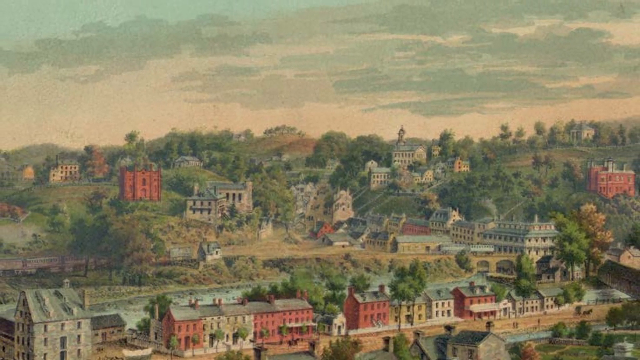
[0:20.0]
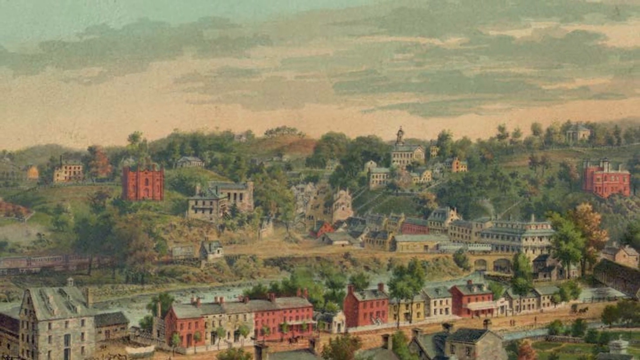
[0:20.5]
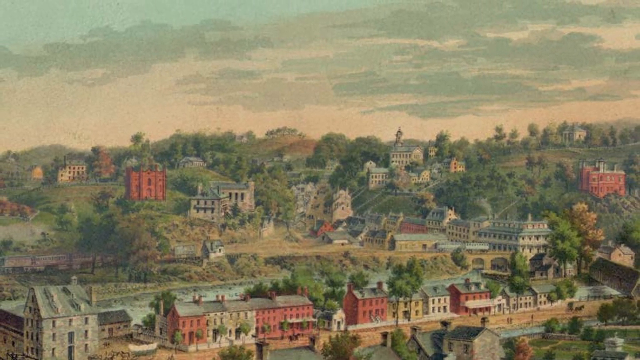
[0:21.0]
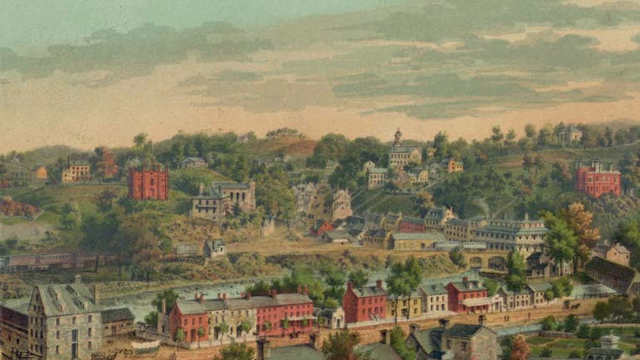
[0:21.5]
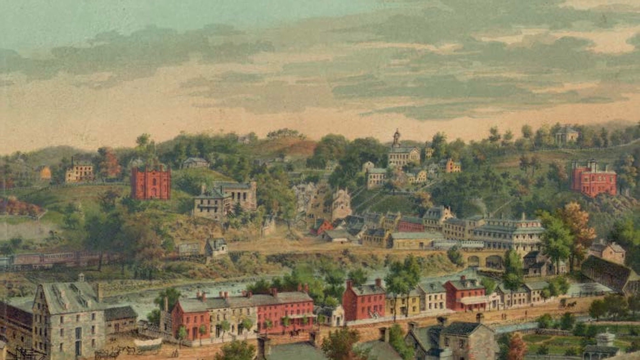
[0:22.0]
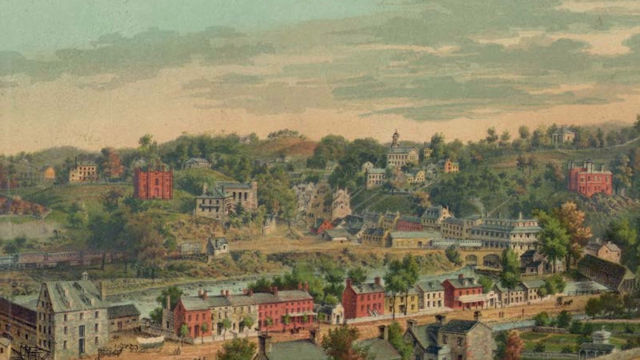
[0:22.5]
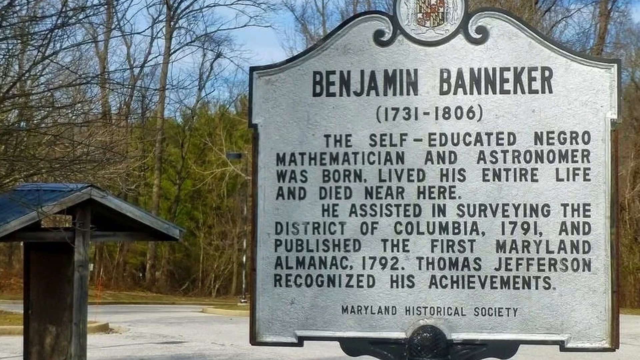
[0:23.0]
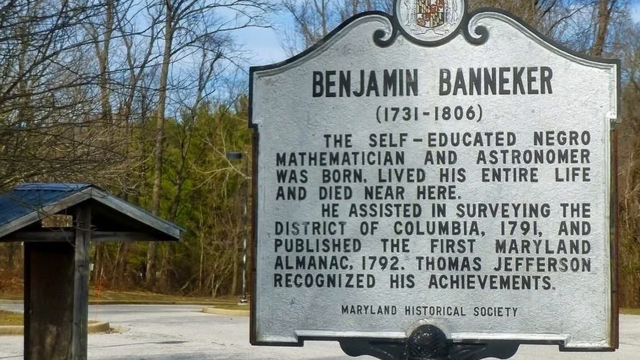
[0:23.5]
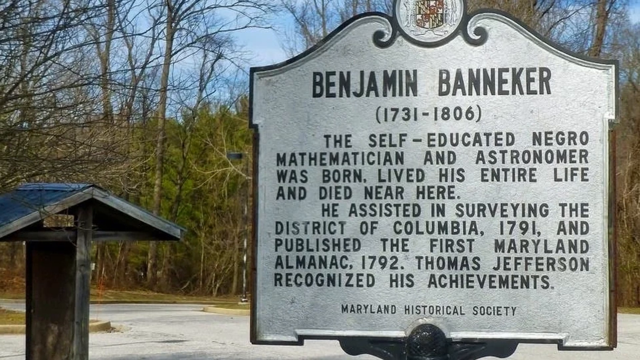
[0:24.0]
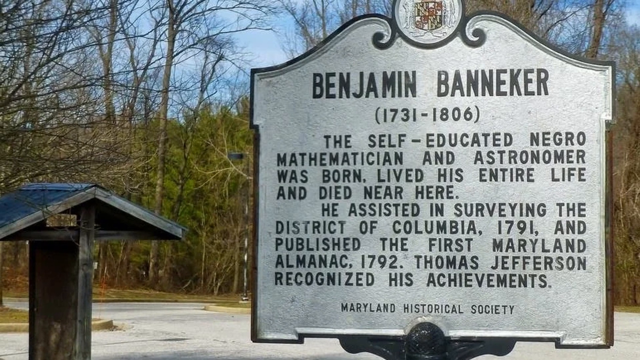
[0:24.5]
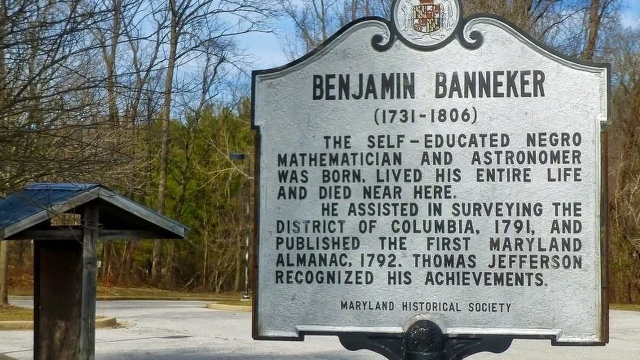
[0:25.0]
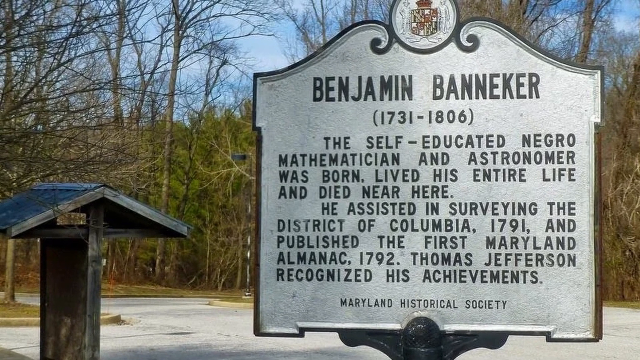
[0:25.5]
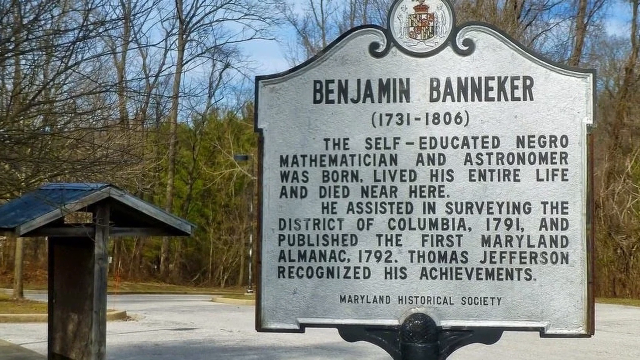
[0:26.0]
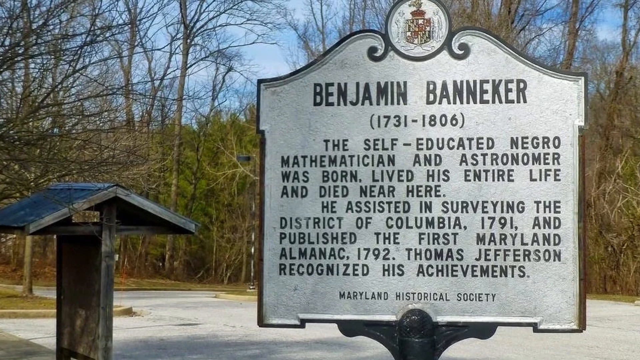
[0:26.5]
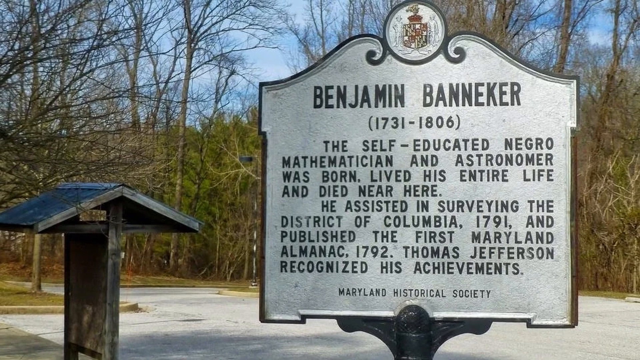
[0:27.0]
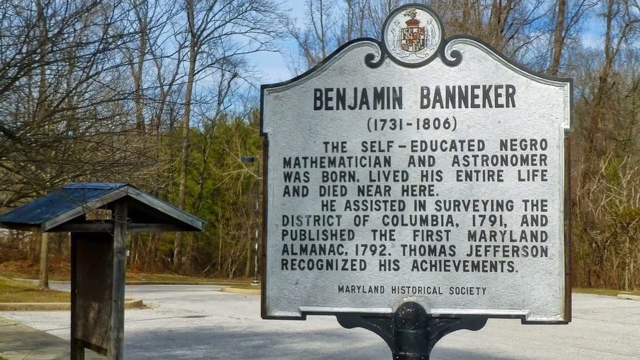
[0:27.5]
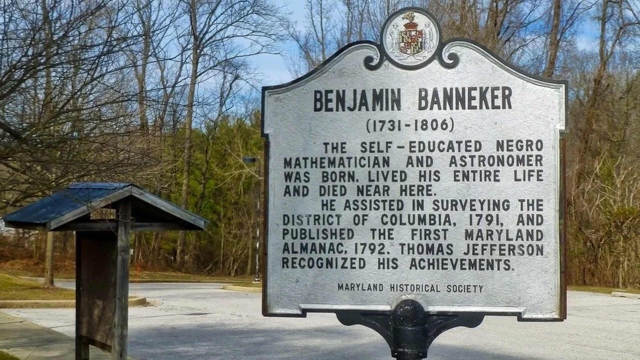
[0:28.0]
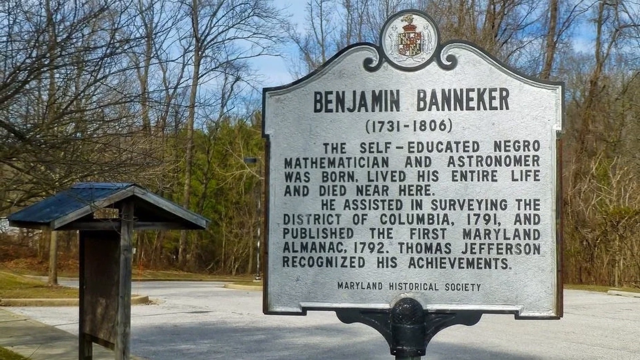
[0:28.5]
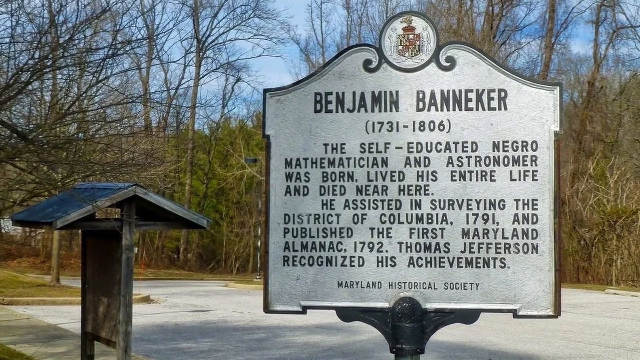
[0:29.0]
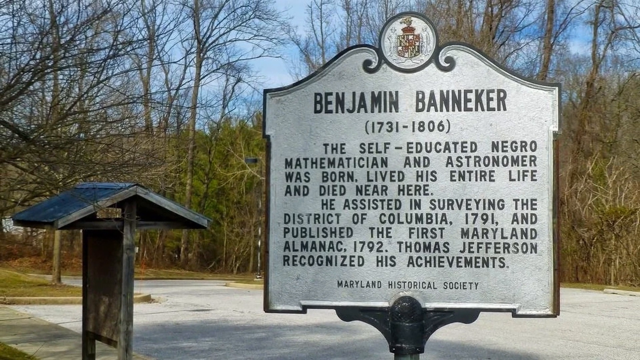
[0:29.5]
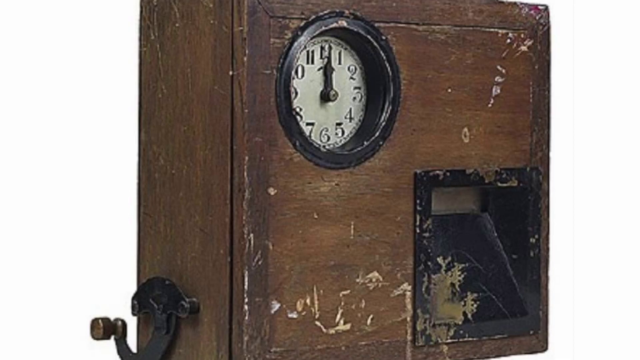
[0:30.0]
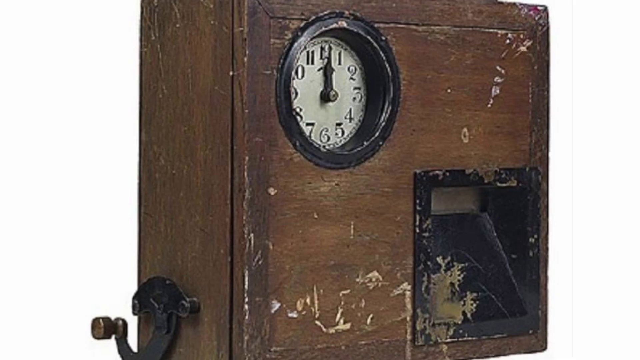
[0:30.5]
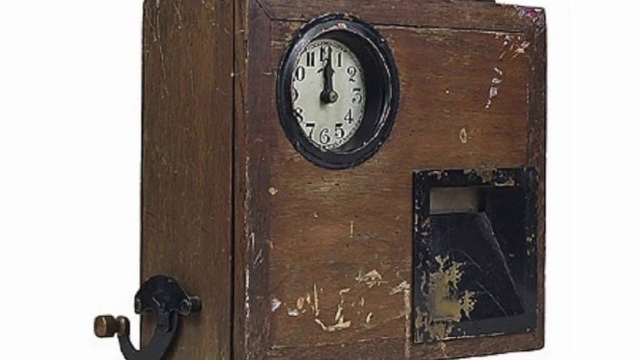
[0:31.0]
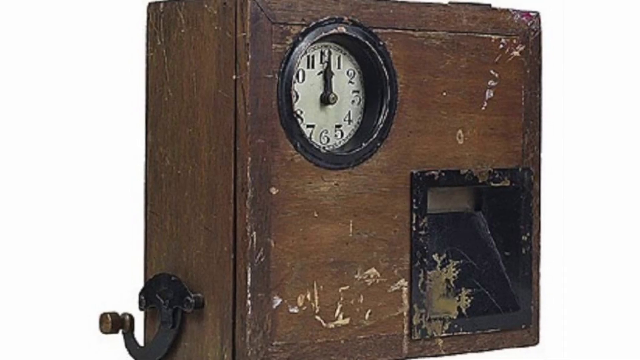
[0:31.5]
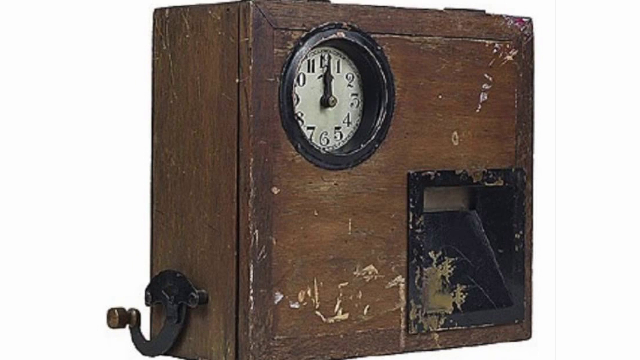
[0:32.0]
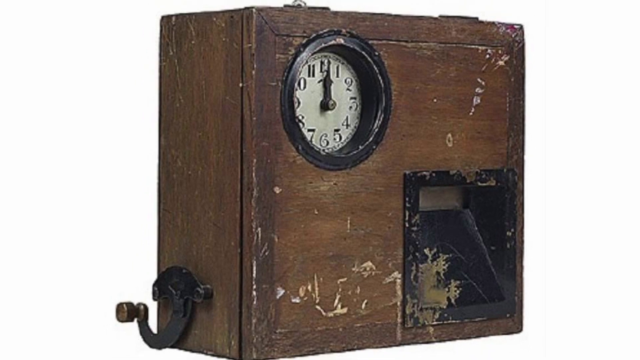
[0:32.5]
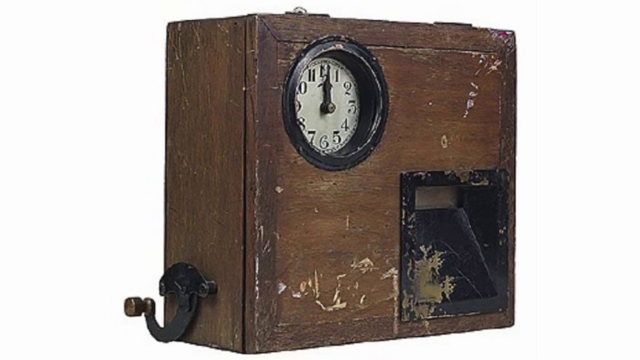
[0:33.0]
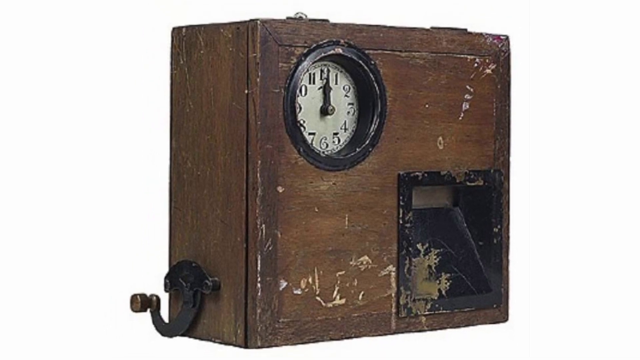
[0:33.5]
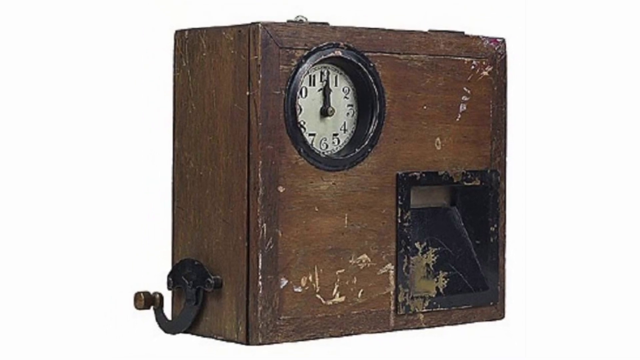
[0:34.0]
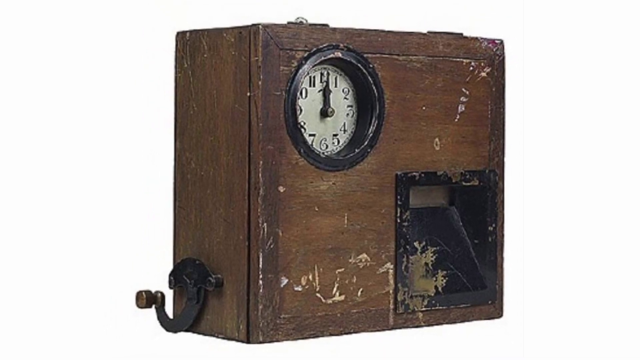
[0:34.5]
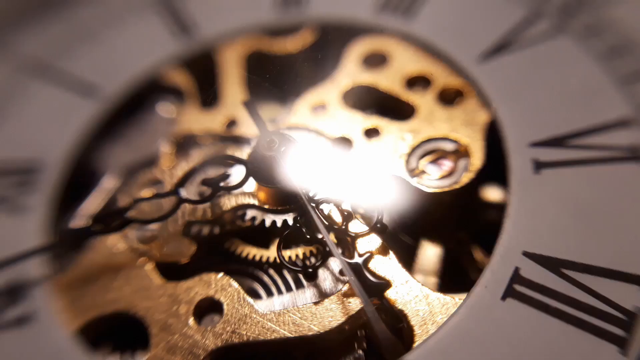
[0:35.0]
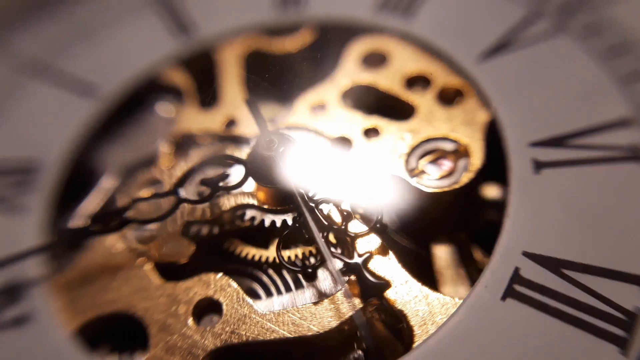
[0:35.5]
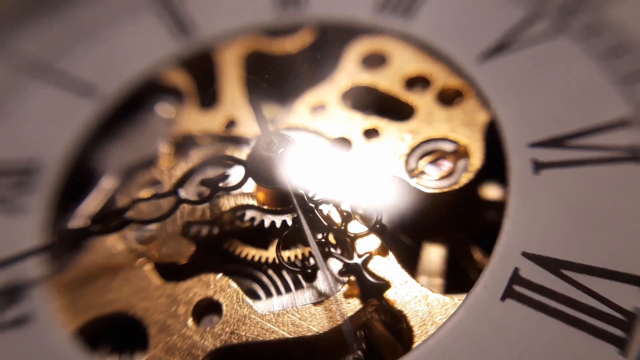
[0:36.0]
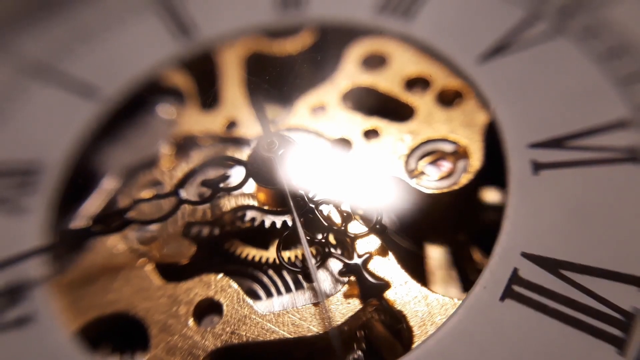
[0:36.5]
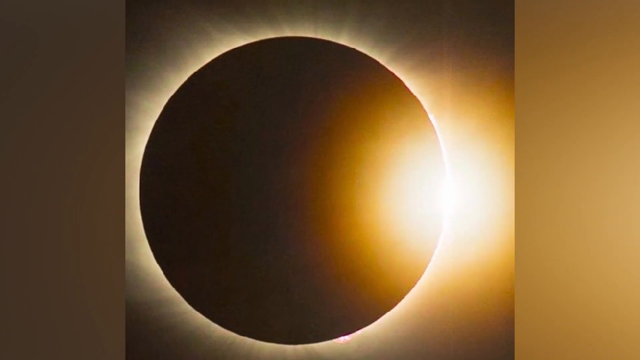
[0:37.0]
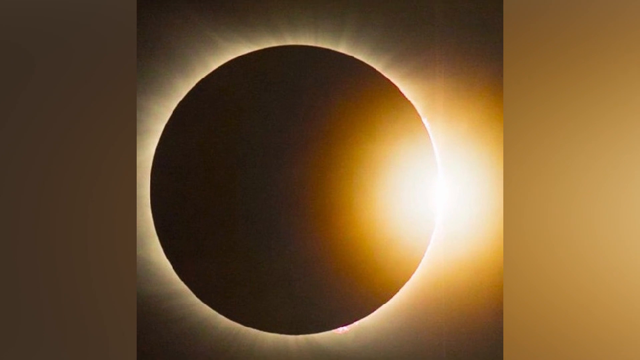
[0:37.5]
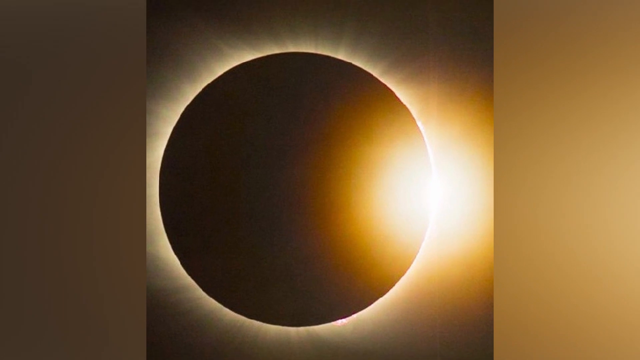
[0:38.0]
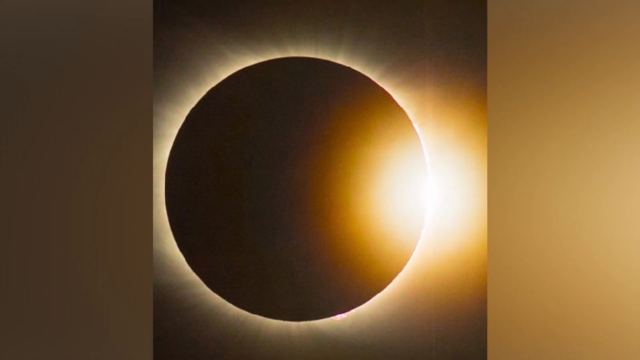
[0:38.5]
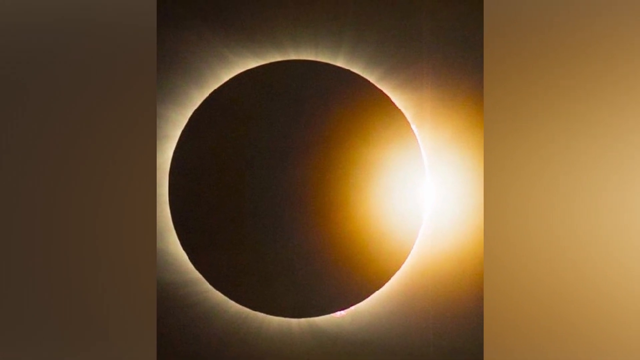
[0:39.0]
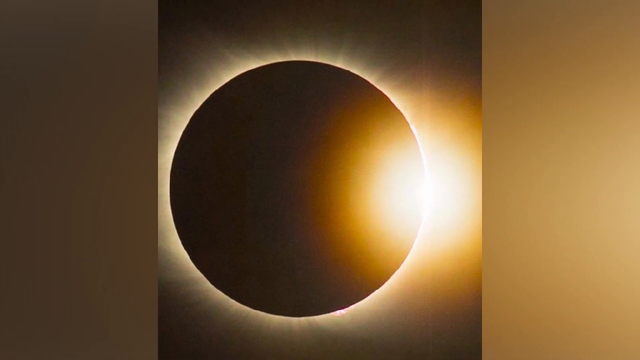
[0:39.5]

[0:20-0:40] The old-fashioned-looking watercolour painting continues, showing a main street in the foreground of a village or town with old terraced houses and detached houses in various colours of red, cream and yellow, with tiled roofs and chimneys. In the distance there are two hillsides with large properties on them, including a large red sandstone castle-type building or hall on the left hillside. There are lots of trees. Next, a sign in a woodland area says "Benjamin Banneker 1731 to 1806 the self-educated Negro mathematician and astronomer was born lived his entire life and died near here he assisted in surveying the District of Columbia 1791 and published the first Maryland almanac Thomas Jefferson recognized his achievements". The sign is from the Maryland Horticultural Historical Society and has a scroll-like top with a circle containing a shield. It stands in front of a forested area, with a car park in the foreground. The screen then cuts to an old-fashioned clock in a wooden case that is weathered and scratched. The box has what looks like a door at the front, and on the right-hand side of the box is a hook made of black metal. The camera pans out, and the next shot shows the internal workings of a clock, with the hands and the mechanism. The next screen shows a picture of a moon or other planet with the sun behind it, giving it a glow on the right-hand side and a white halo effect on the outside of the planet in the foreground.